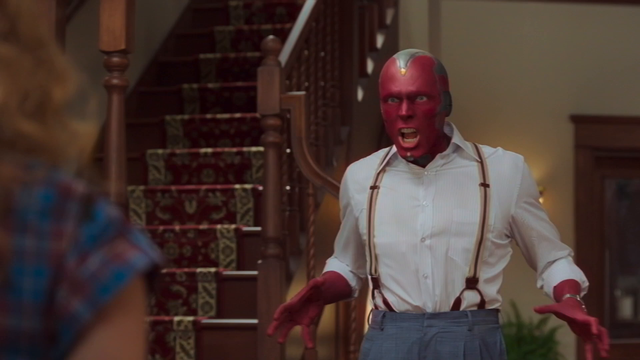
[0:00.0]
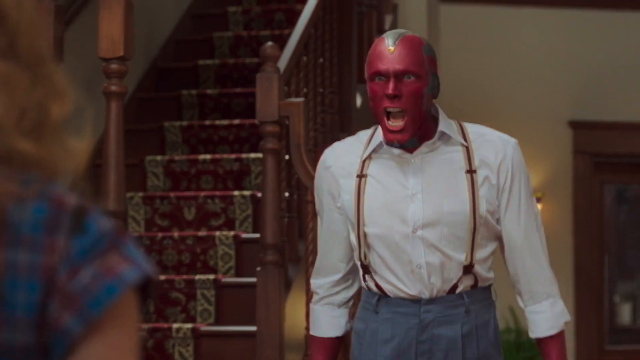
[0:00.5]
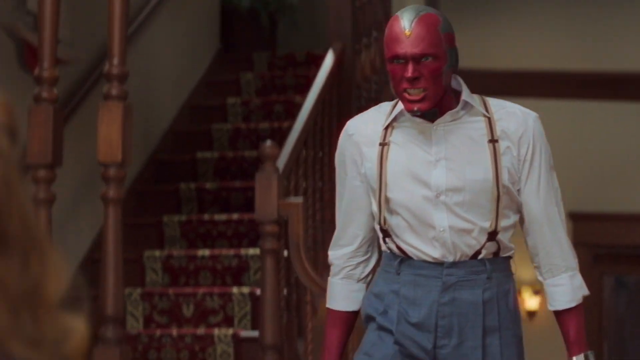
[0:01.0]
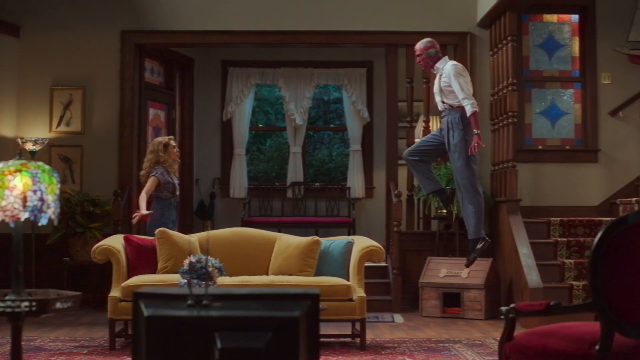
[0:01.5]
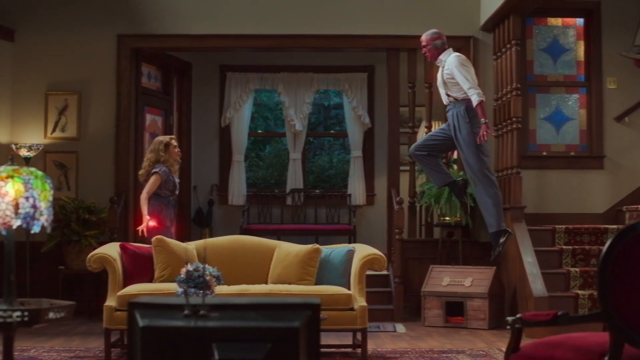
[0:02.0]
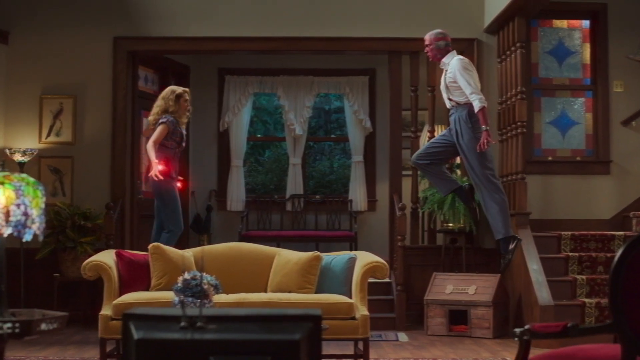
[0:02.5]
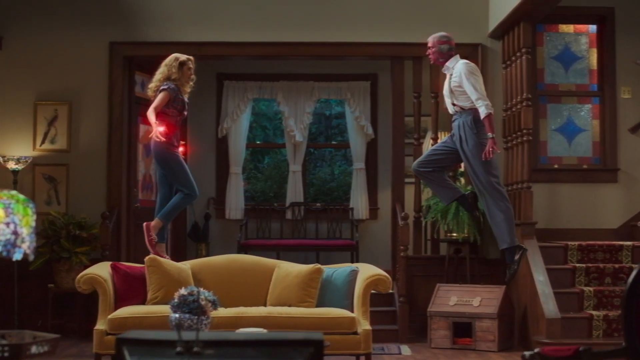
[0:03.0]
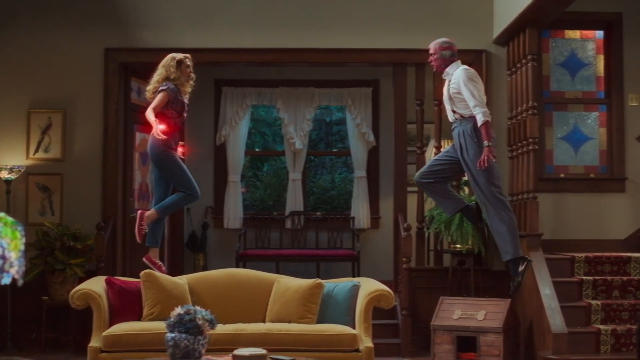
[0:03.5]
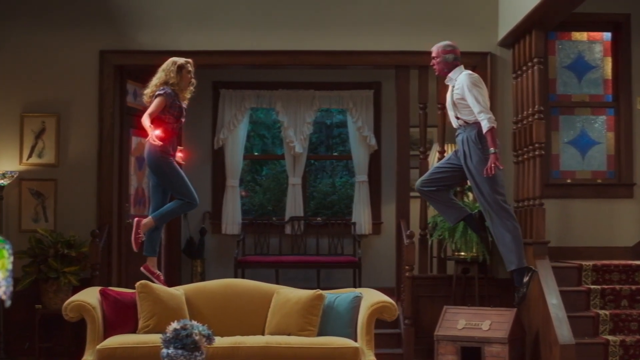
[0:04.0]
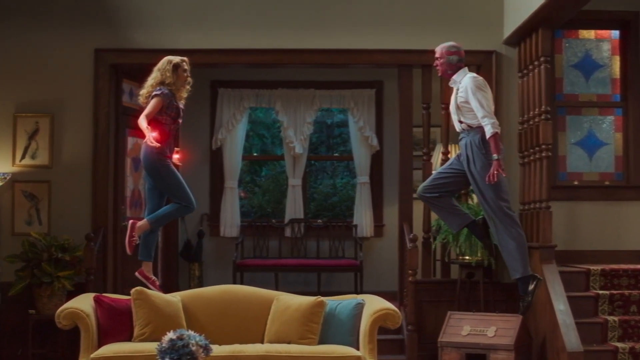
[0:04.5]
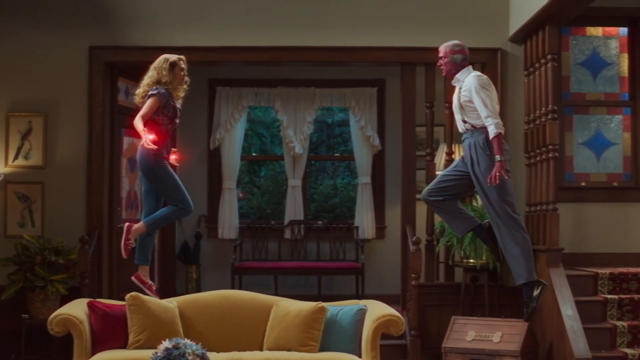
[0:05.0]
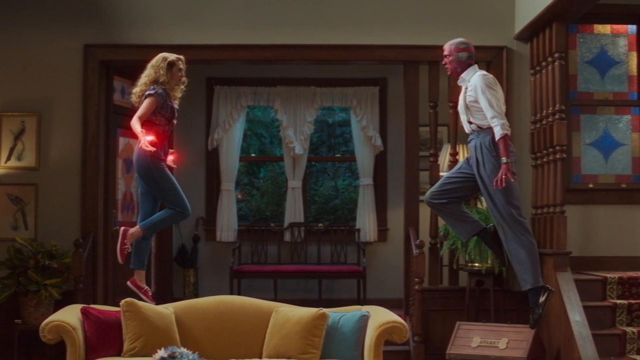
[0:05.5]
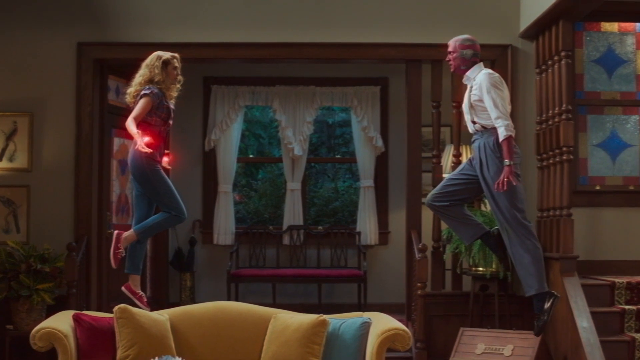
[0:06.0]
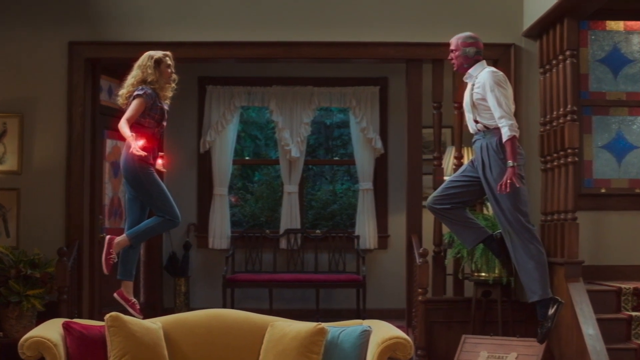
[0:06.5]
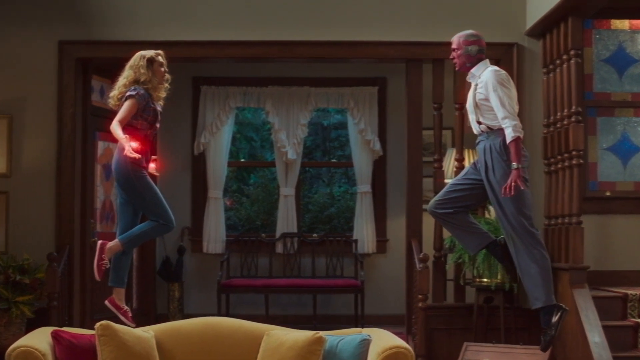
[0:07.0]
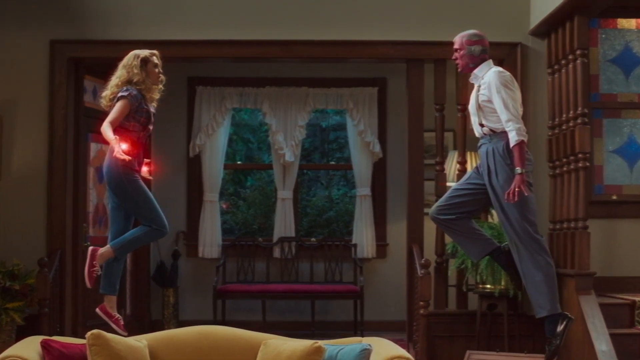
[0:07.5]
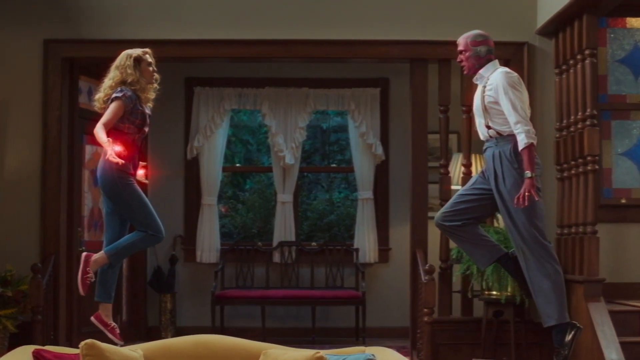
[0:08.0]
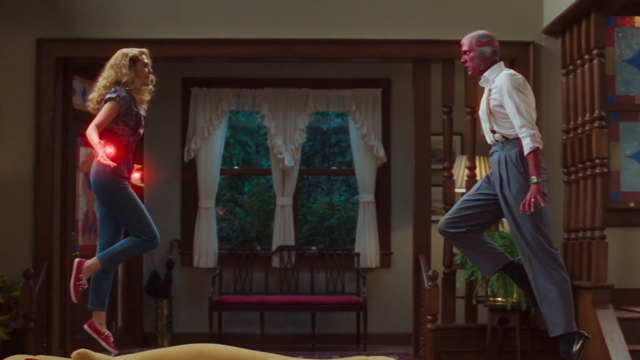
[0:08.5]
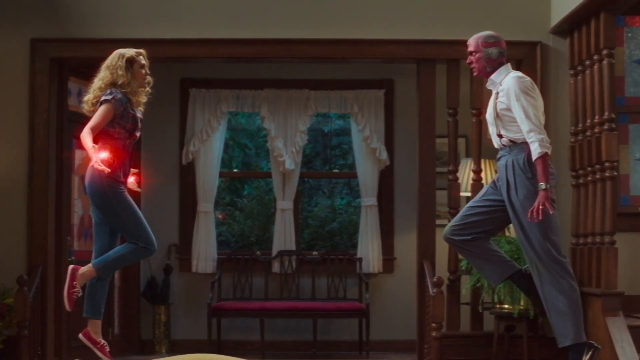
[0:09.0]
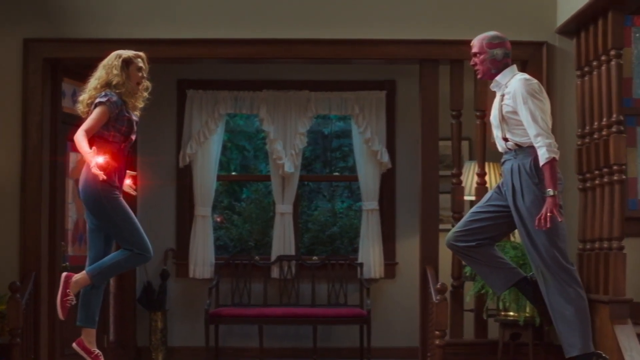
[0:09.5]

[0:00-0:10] A man with a red complexion wears gray trousers, a white formal shirt, a watch on his left wrist and a ring on his finger. He faces off against a woman with blonde hair who wears blue tights, red shoes and a blue top; both of them have superpowers. At first they are on the ground, but both become angry and rise up from the ground, wanting to fight each other. They talk to each other, and at the last moment before the fight the red man is about to shout something before he attacks. In the middle of the red man there is something silver or goldish. In the background there is a white cat, three chairs by the window, a big coffin, and stairs with a red carpet and gold lines along the side, inside a house.